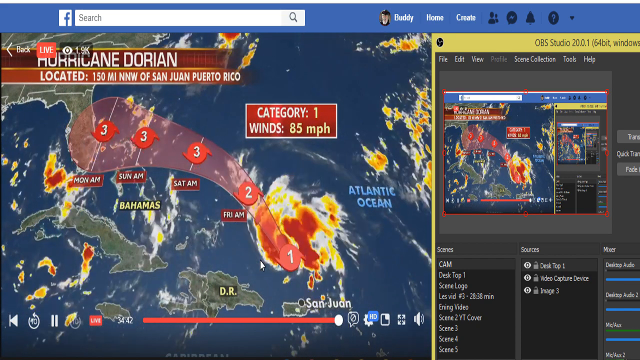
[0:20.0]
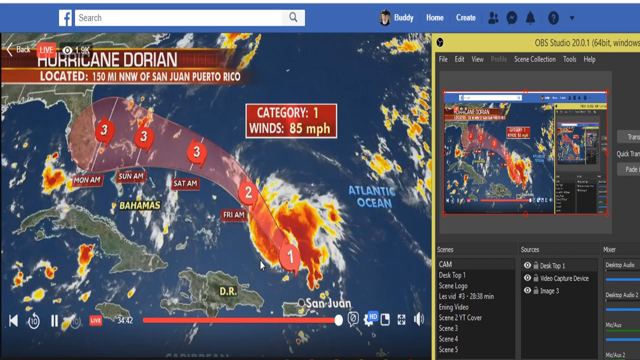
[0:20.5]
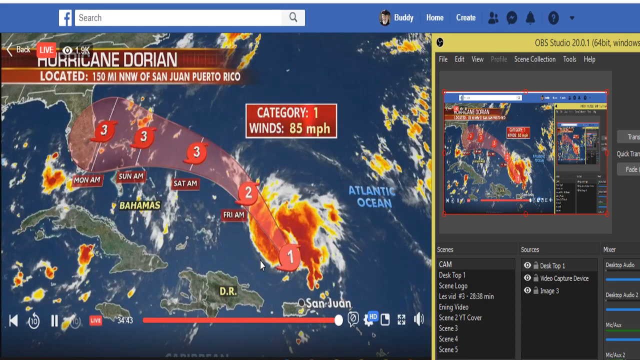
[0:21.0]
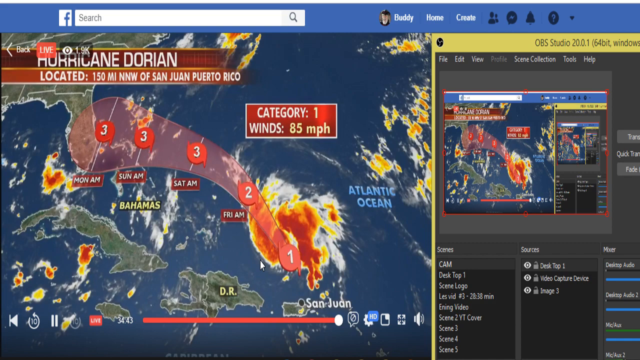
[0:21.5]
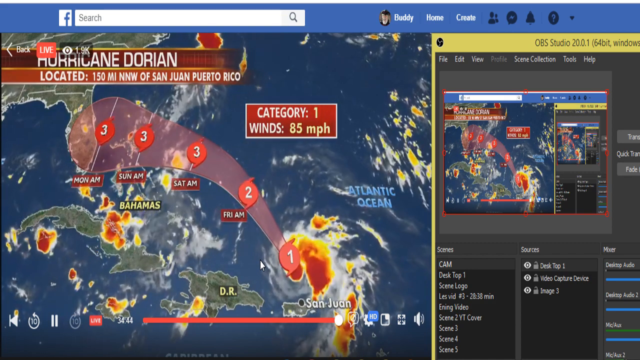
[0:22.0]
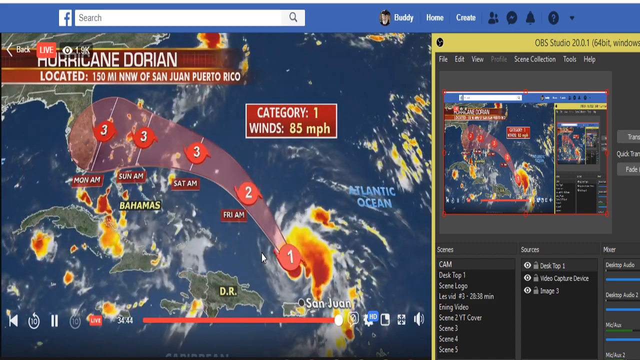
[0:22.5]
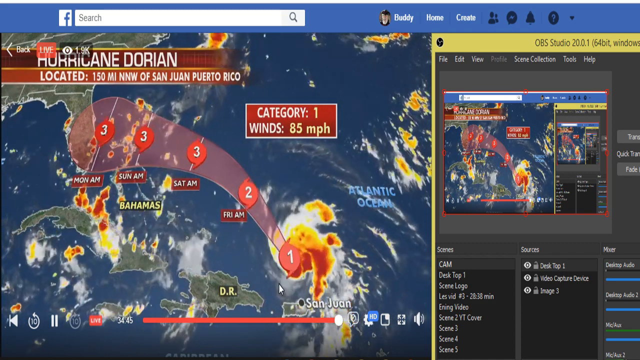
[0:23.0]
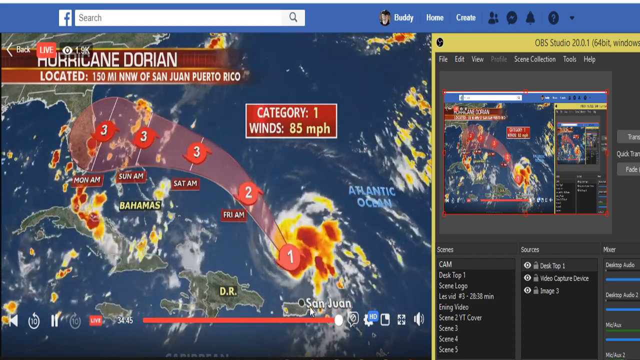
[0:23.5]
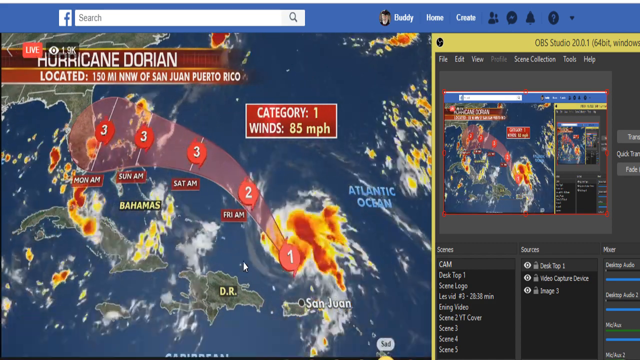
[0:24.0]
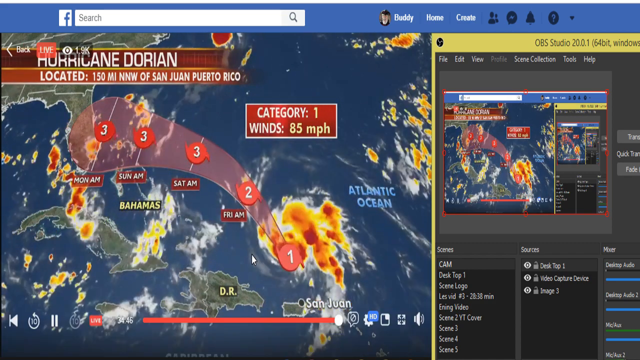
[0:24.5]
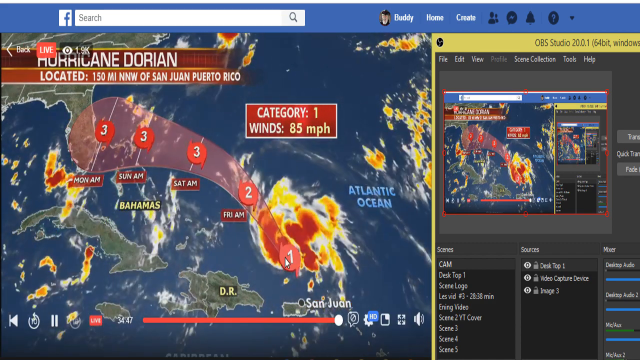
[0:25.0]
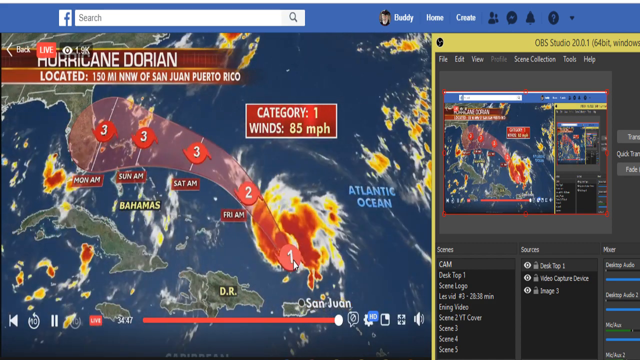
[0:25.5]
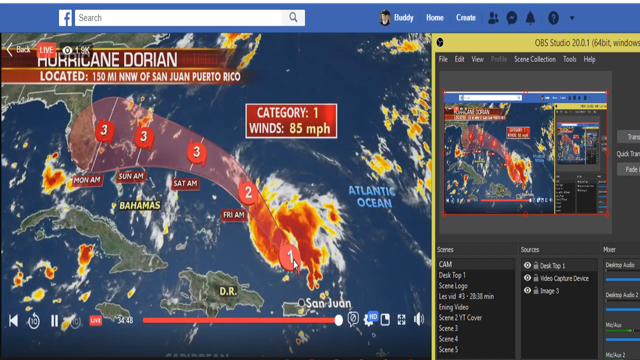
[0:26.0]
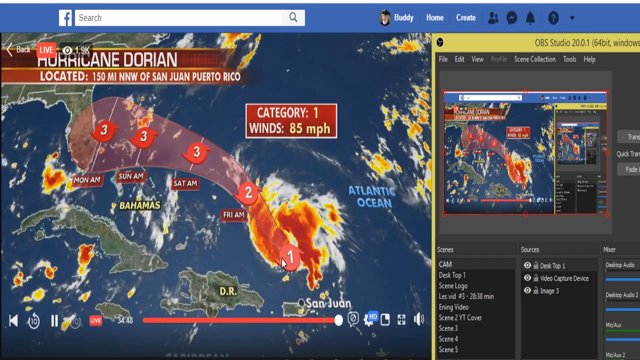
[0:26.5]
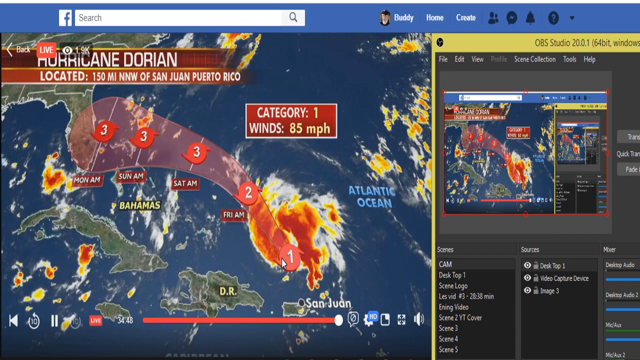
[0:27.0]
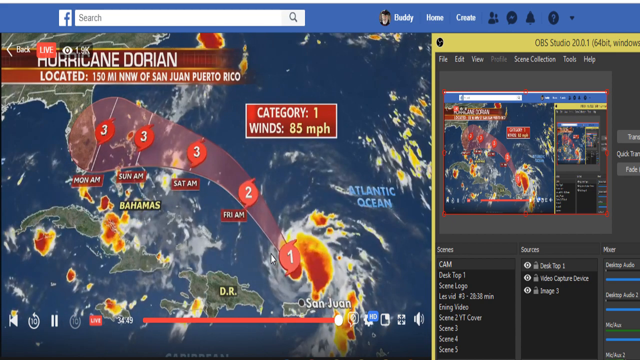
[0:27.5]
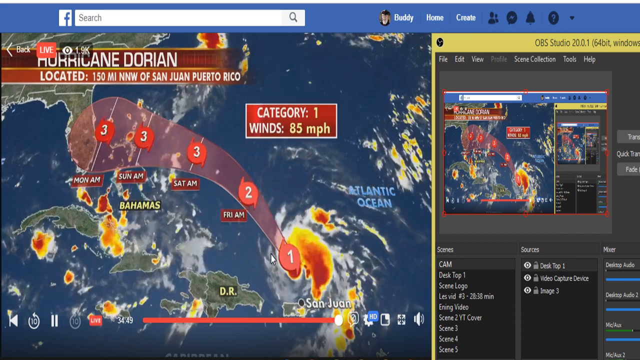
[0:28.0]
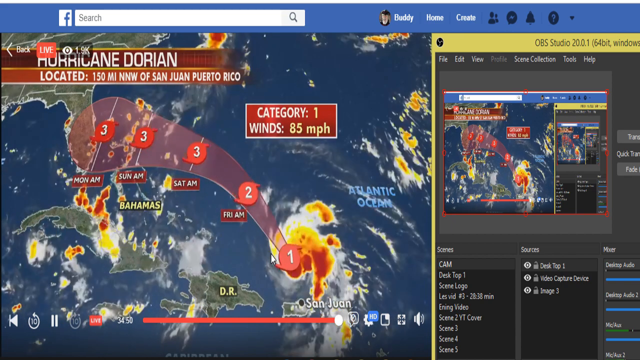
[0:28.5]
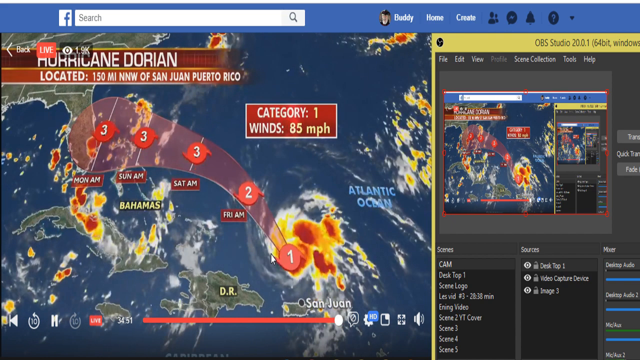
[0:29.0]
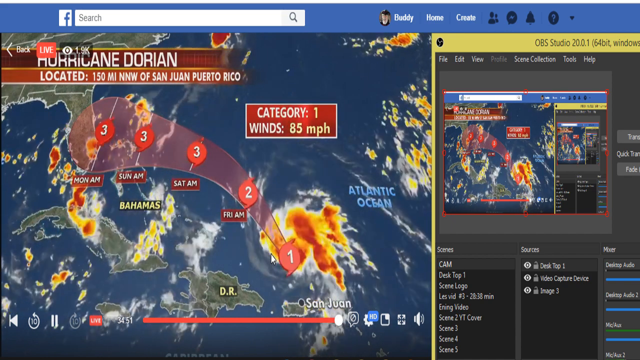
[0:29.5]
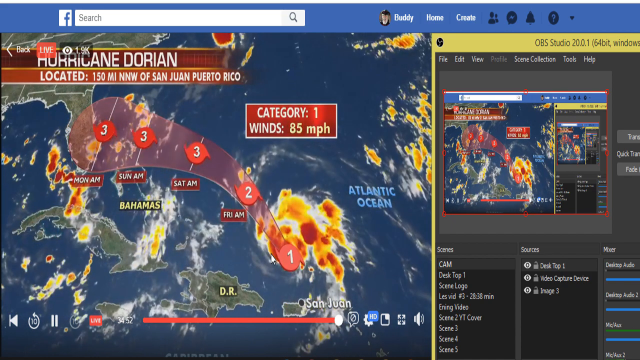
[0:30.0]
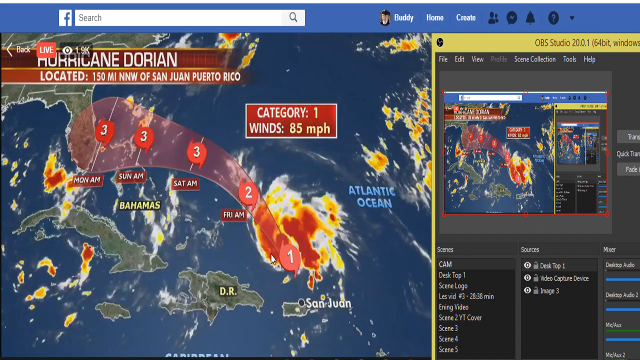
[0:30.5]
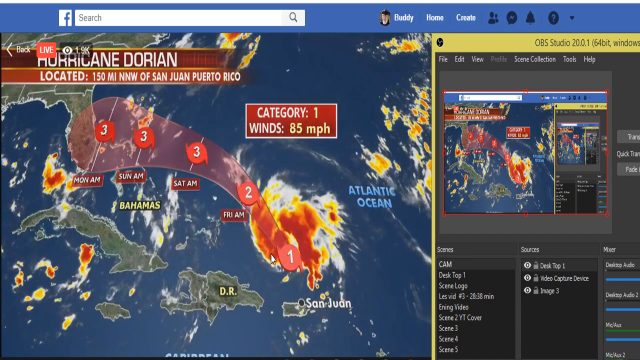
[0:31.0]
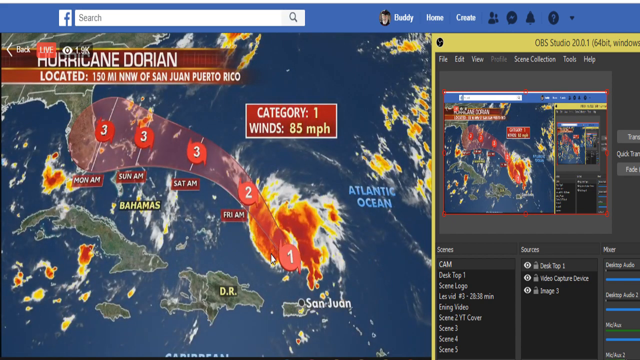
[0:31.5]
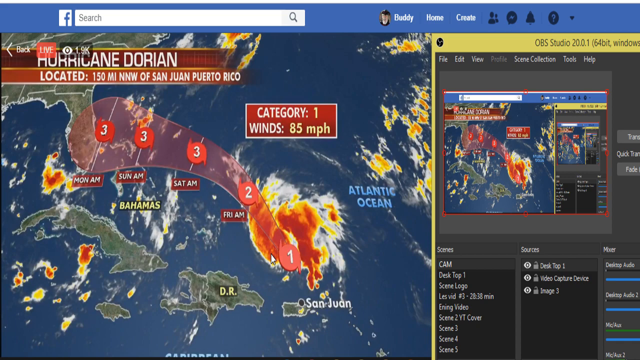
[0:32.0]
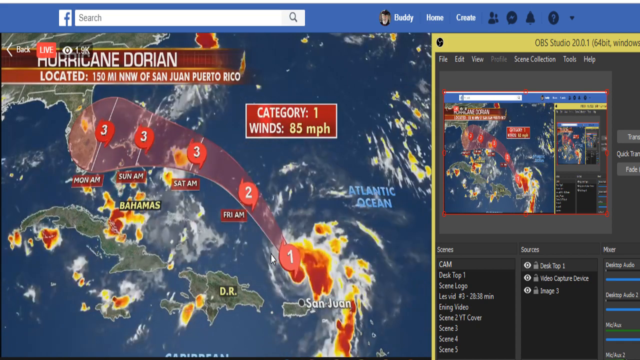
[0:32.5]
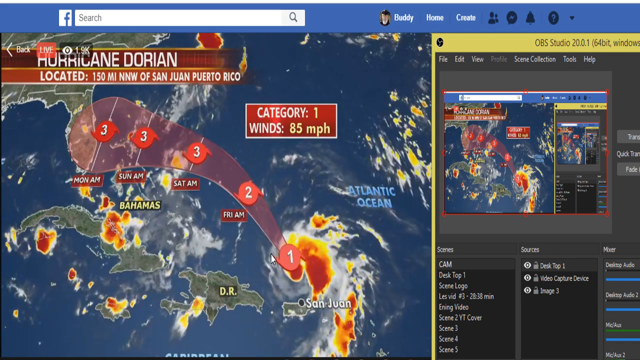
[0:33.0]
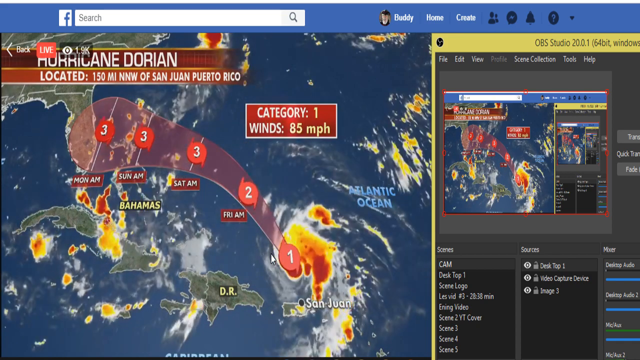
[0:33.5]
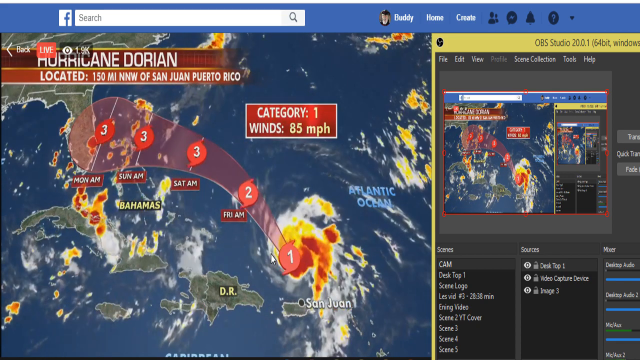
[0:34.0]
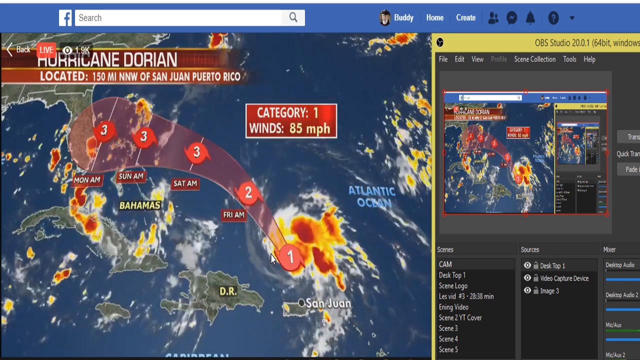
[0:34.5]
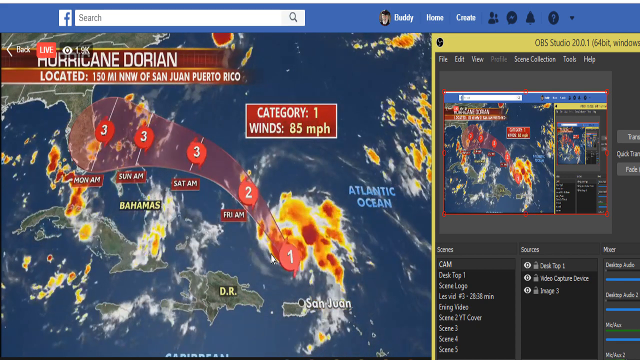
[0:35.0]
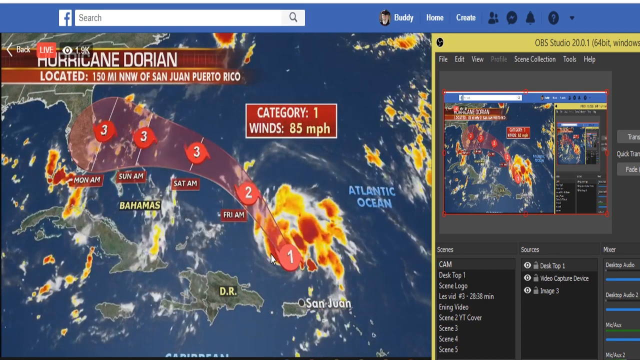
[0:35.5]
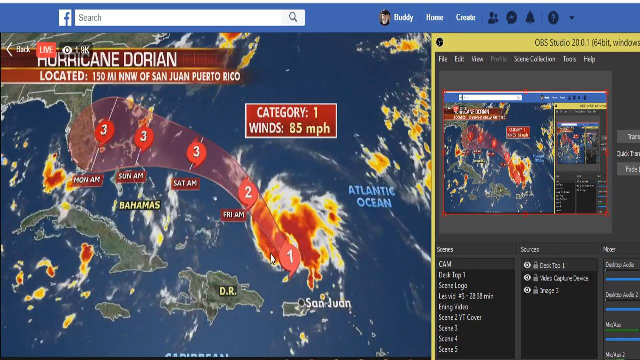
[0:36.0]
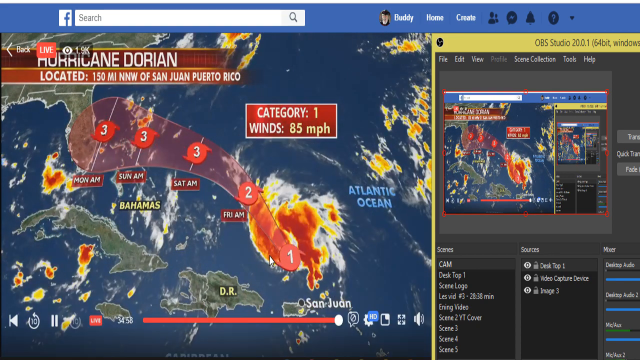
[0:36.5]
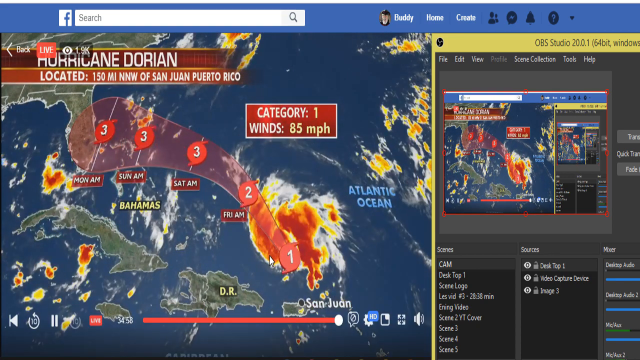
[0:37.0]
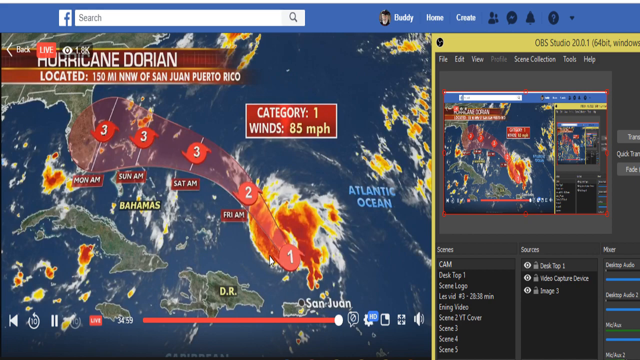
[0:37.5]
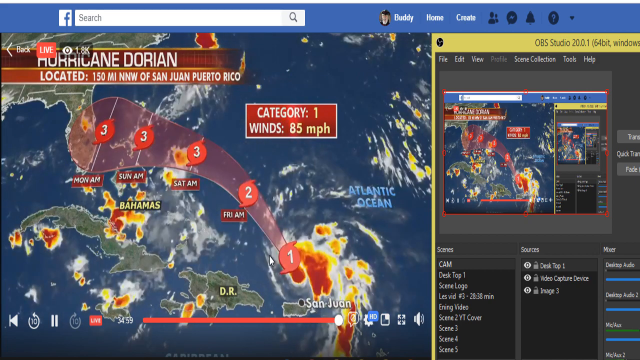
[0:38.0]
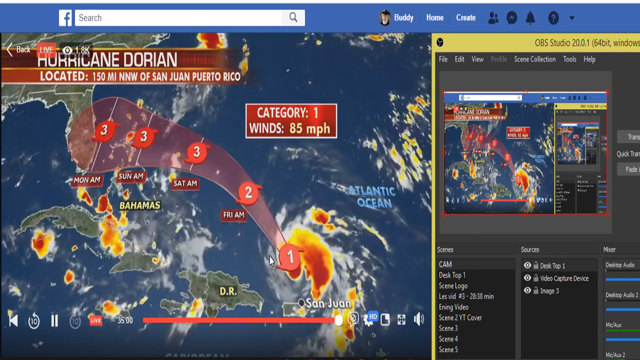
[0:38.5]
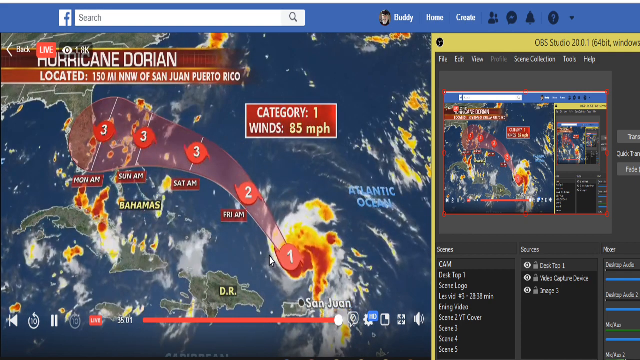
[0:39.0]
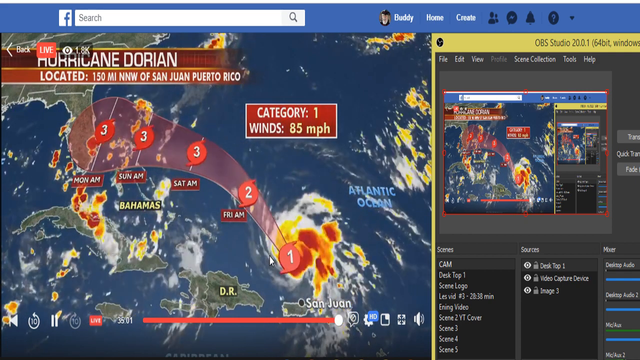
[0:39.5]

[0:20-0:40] The live stream continues. On the weather map, a cloud formation is visible, including a really large, sort of hurricane-looking cloud coming in from the south from San Juan and moving in a northwest direction. A red, translucent, sort of blob that kind of looks like a snake starts at the bottom left from a 1, moves up toward a 2 at the top left, and at the very top left has three sections labeled 3, apparently indicating the storm at a two by Friday morning and a category three by Saturday, Sunday and Monday mornings. The Facebook live interface is also visible, with media buttons at the bottom such as play, pause, rewind and fast forward 30 seconds, and at the top a red square that says "live" along with "1.5k", apparently the current number of viewers.